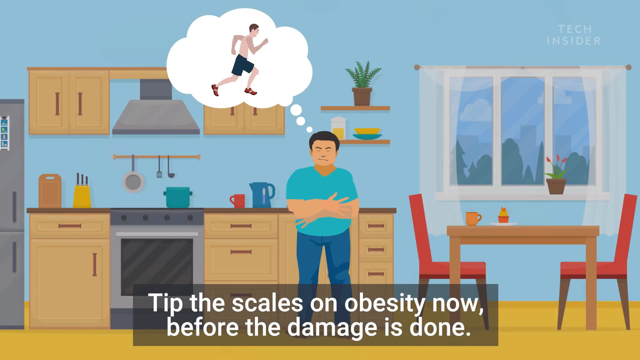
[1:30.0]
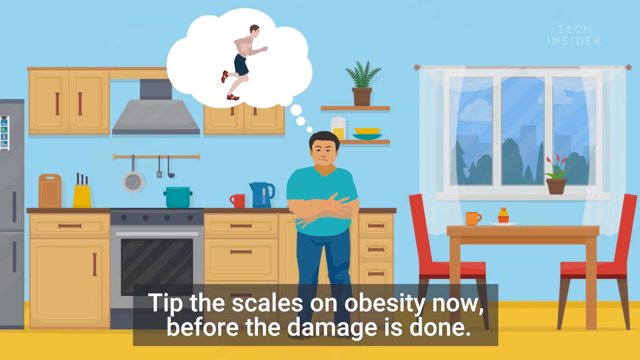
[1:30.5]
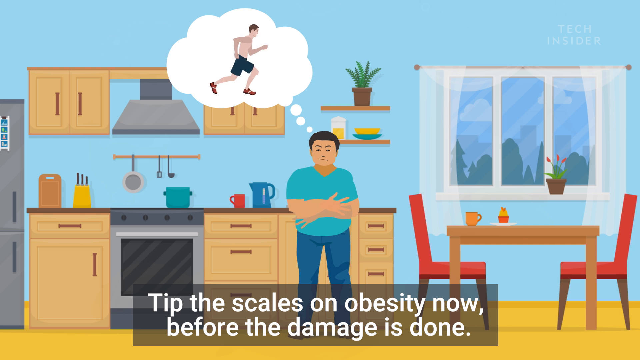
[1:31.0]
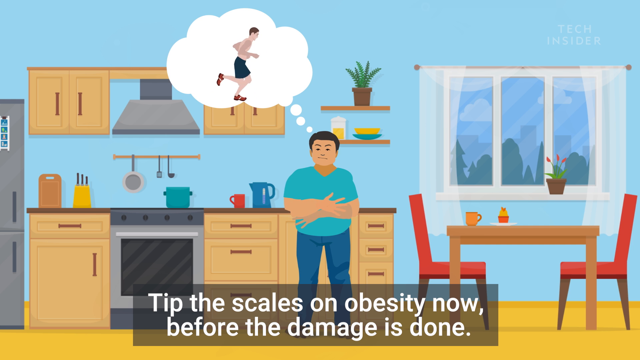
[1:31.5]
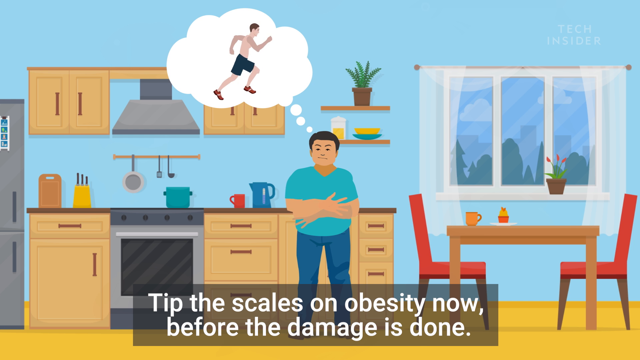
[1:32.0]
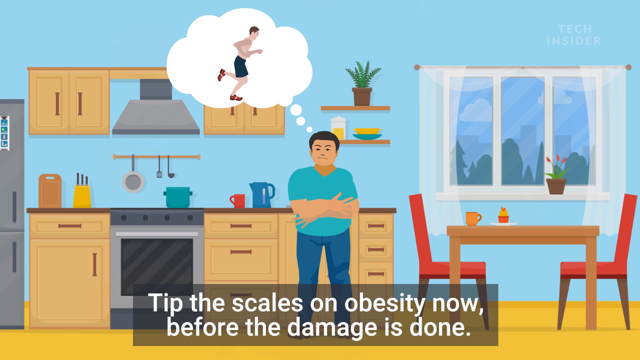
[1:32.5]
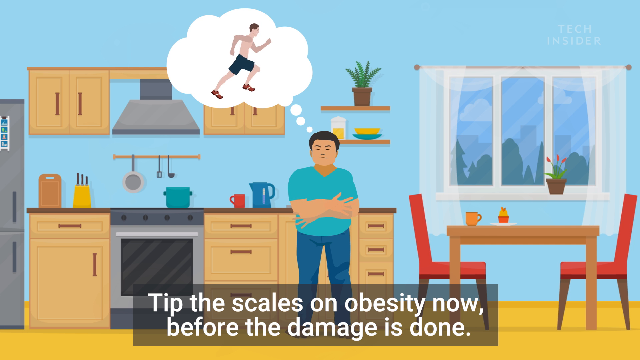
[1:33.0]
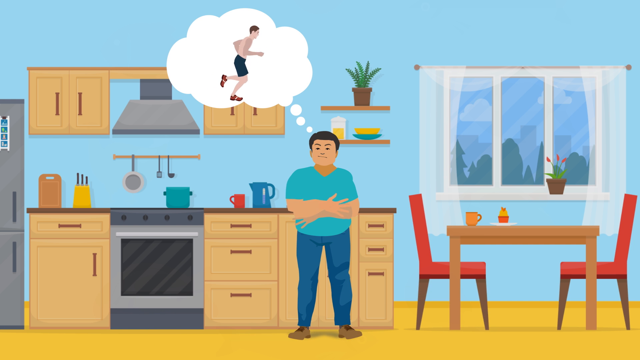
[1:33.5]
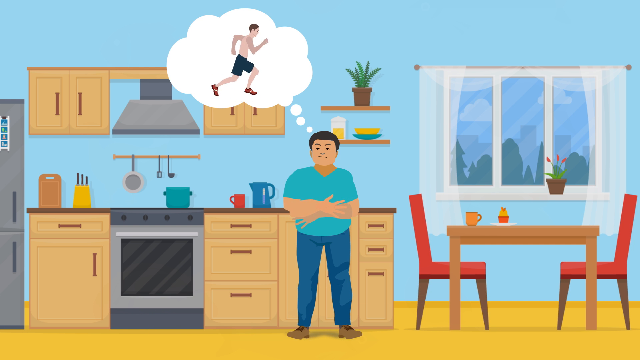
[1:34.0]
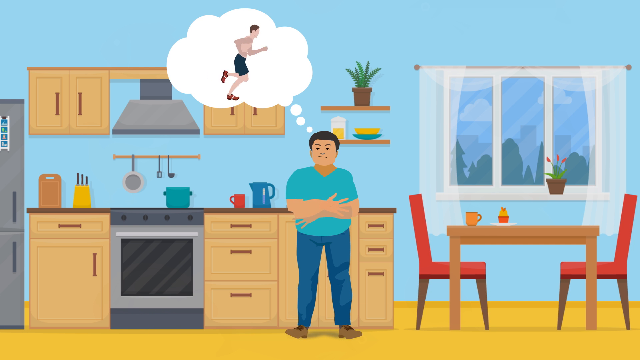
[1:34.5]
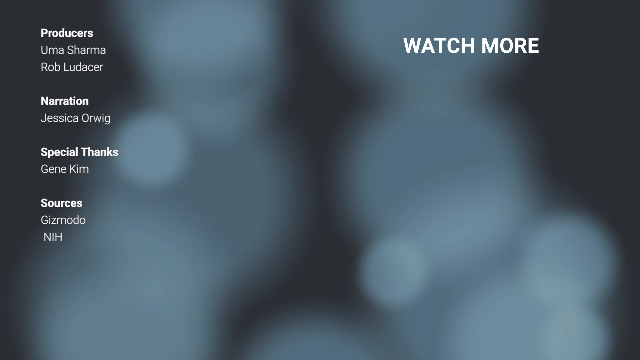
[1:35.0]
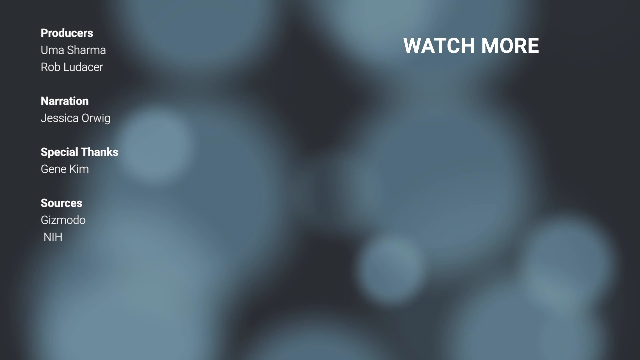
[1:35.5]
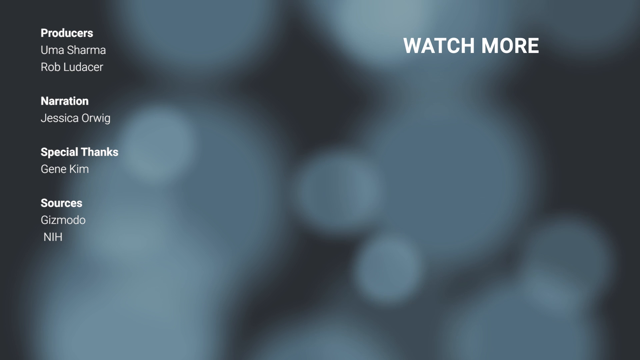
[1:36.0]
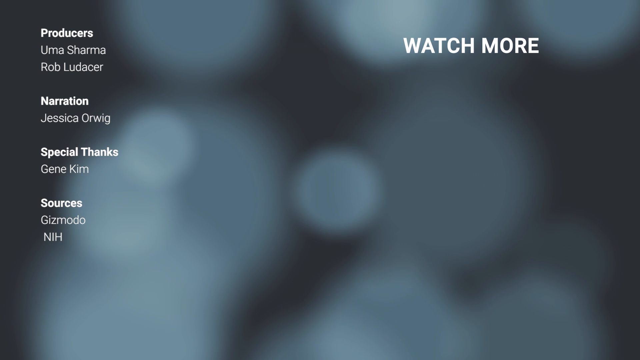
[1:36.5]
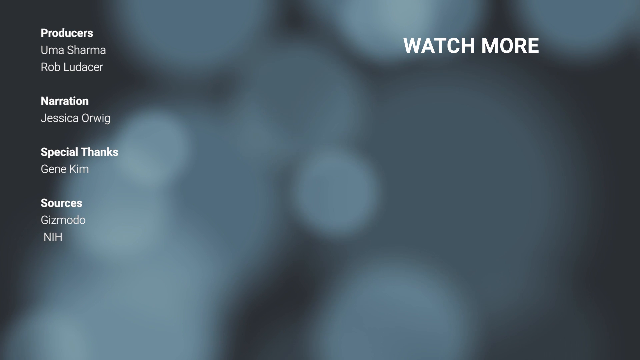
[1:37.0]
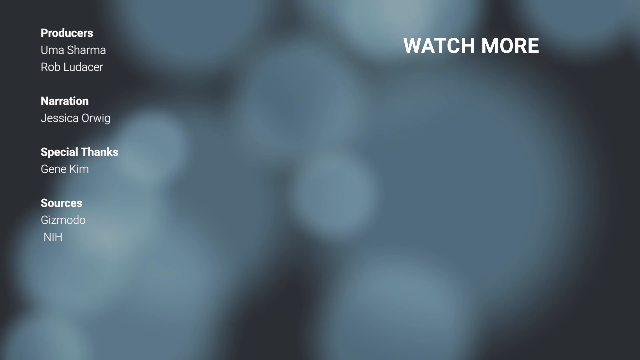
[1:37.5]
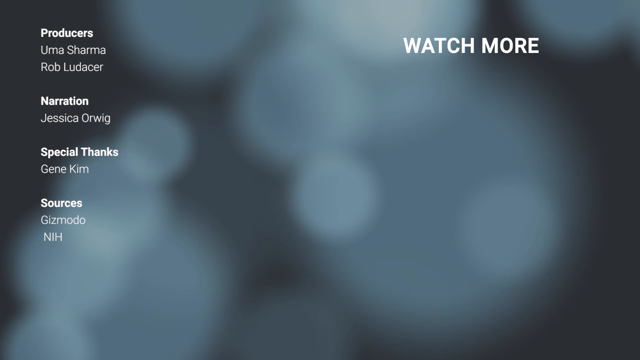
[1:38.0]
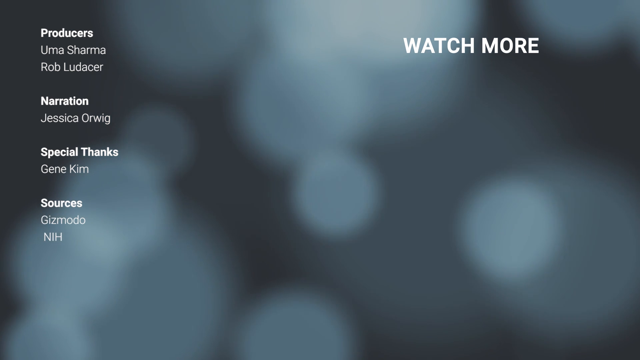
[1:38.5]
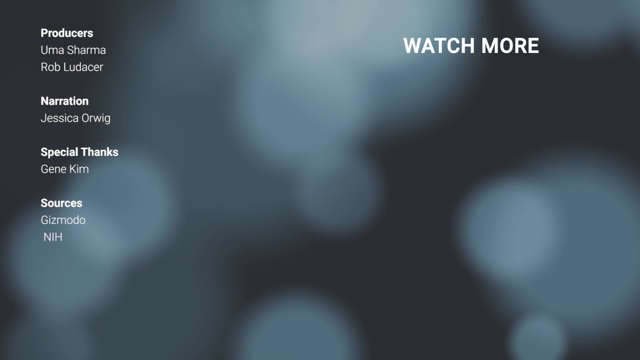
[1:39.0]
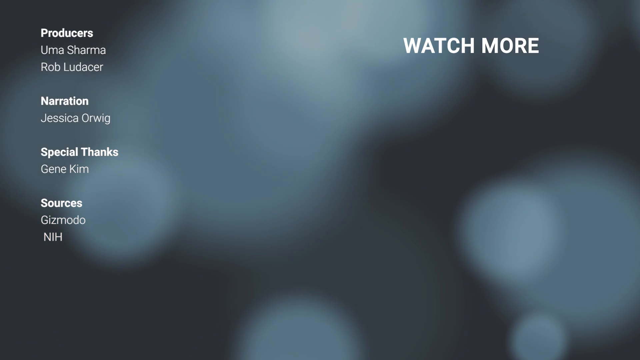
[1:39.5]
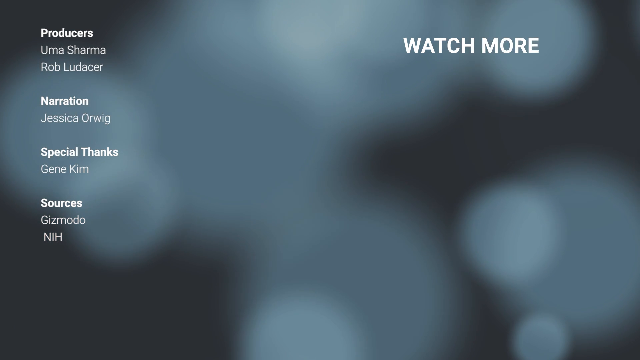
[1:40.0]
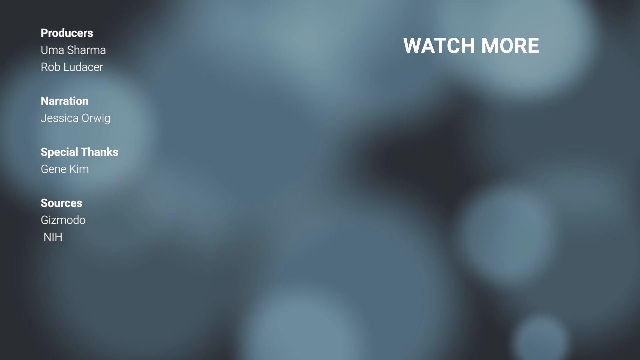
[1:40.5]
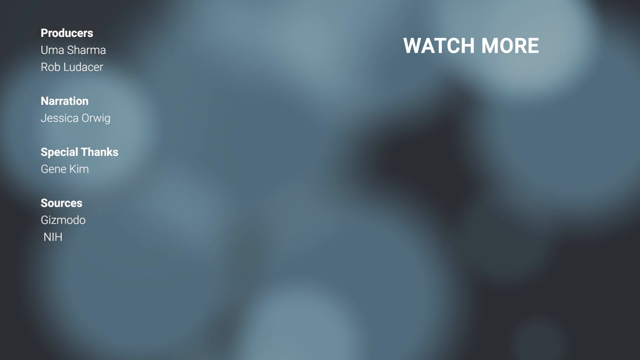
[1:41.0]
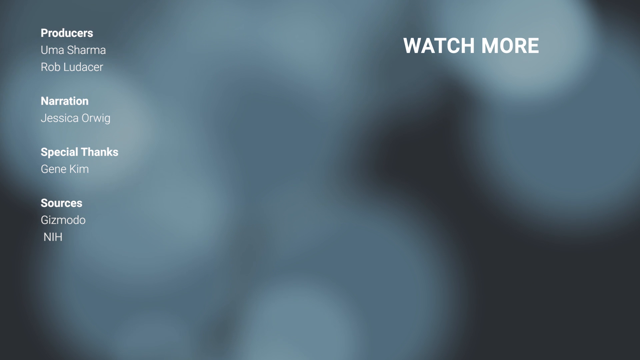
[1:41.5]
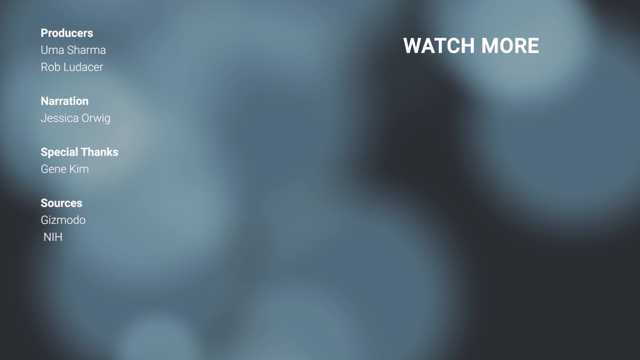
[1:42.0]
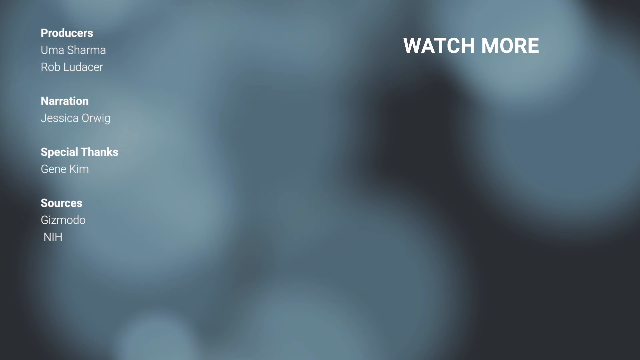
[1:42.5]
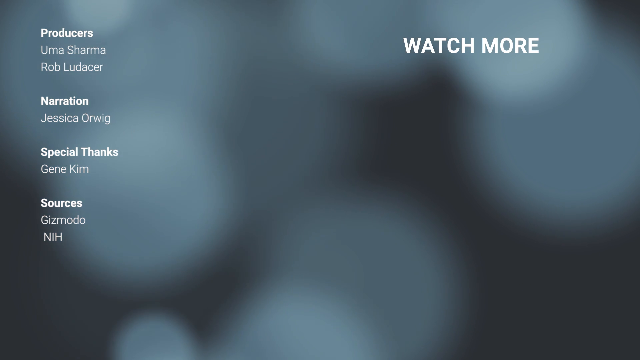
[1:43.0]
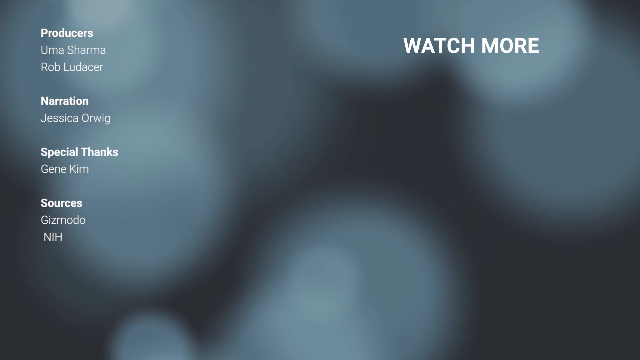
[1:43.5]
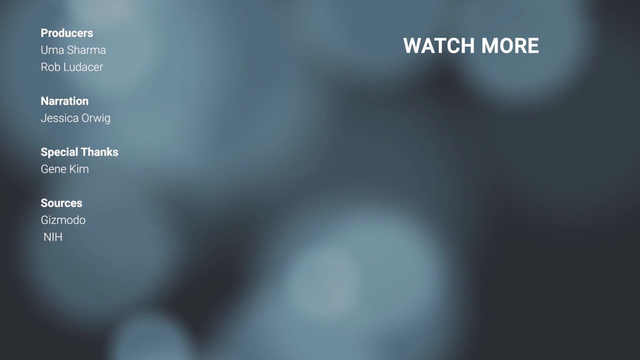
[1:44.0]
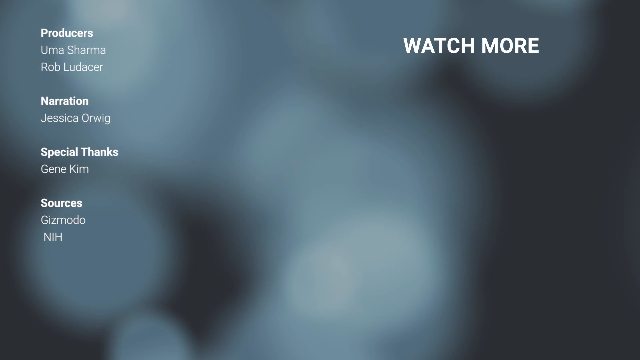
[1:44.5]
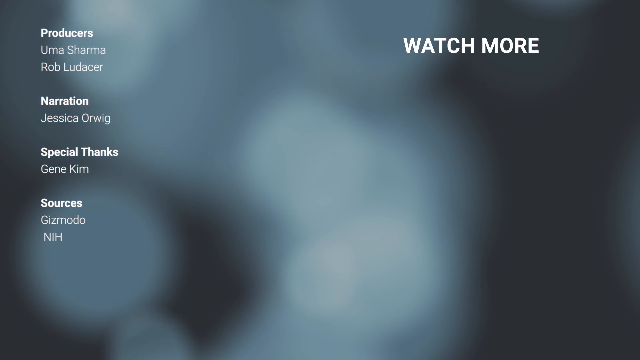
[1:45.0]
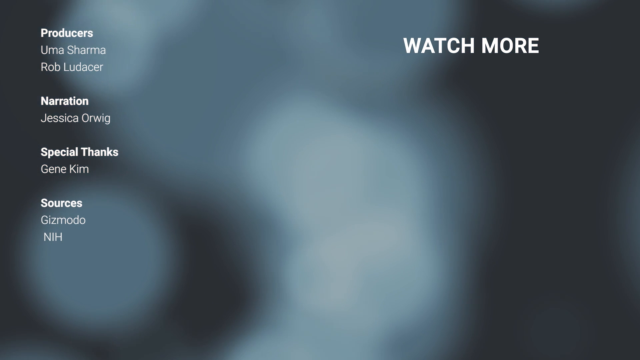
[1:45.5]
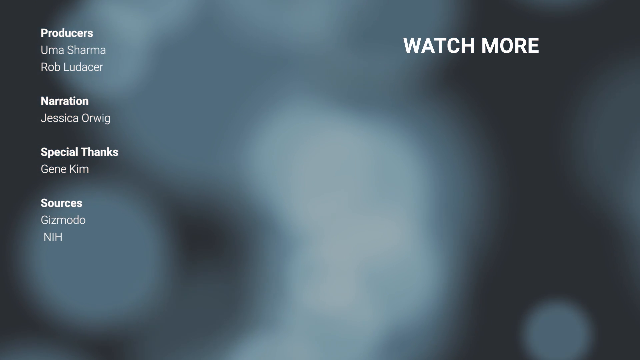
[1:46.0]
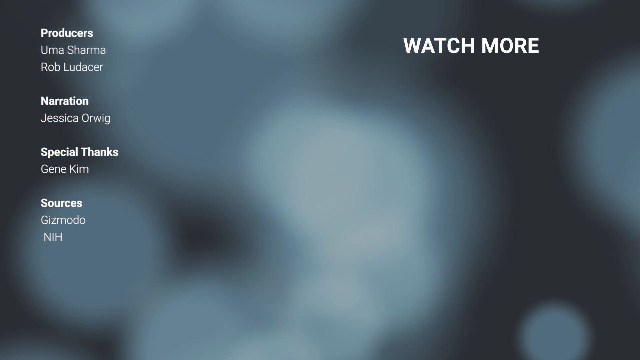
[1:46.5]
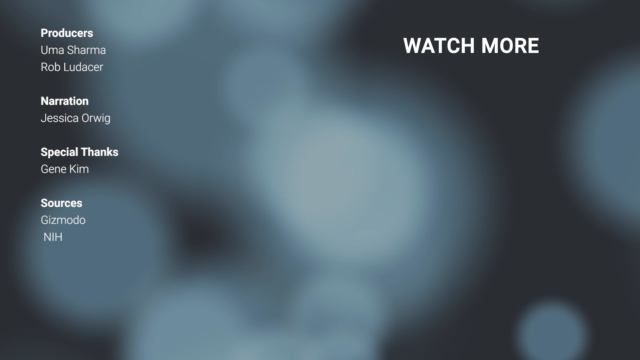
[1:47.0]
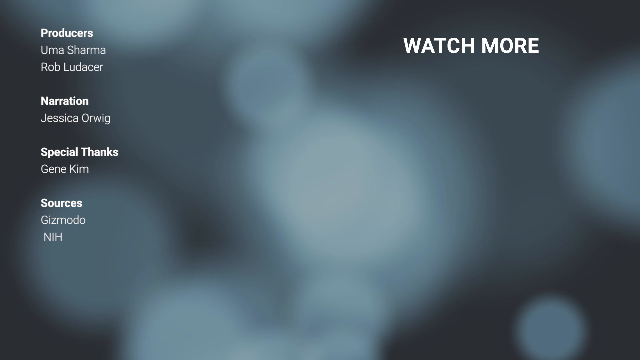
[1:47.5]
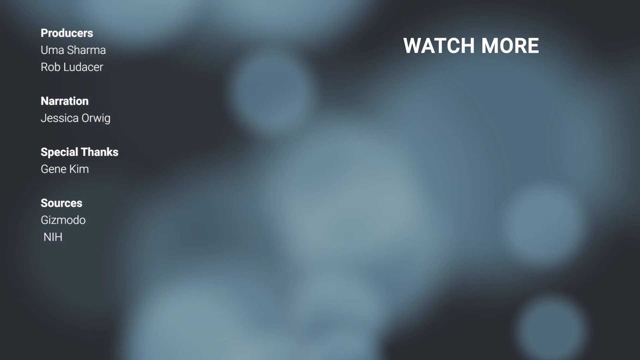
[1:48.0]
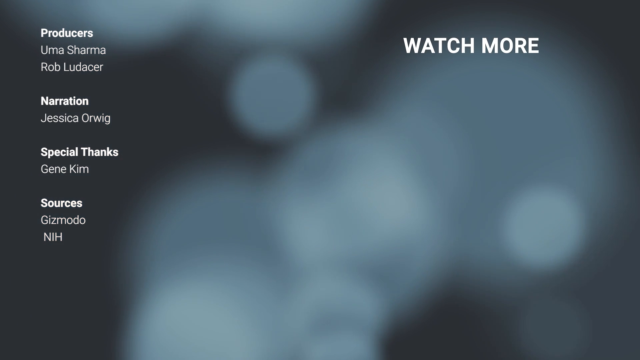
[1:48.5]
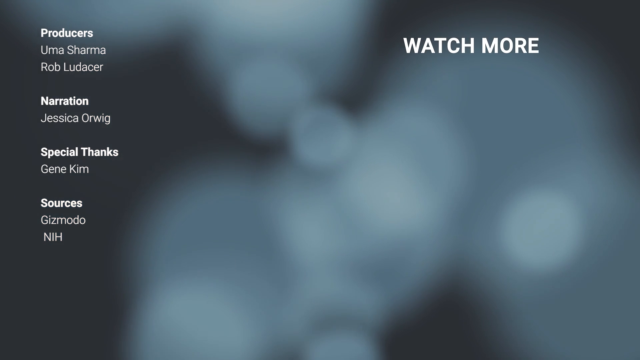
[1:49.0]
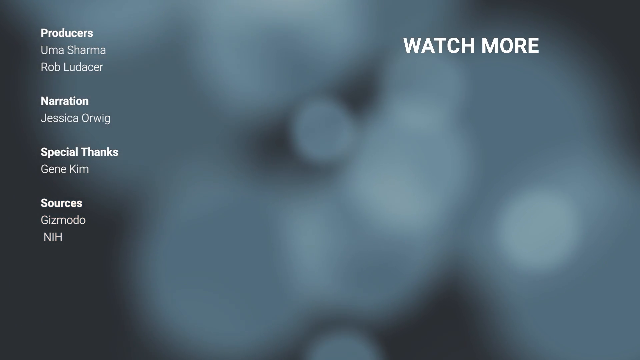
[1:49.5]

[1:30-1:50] The man in the blue shirt and dark blue pants stands in the middle of his kitchen with a thought bubble coming out of his head, showing a lean man wearing only blue shorts and running shoes. The text at the bottom says "tip the scales on obesity now before the damage is done." The man's arms are crossed in front of his chest while the lean man keeps running inside the thought bubble. The scene holds for a few seconds, then transitions to a dark gray screen with end credits: the right side says "watch more," and the left side lists names of producers, the narration, special thanks and sources. This screen stays for a few seconds.